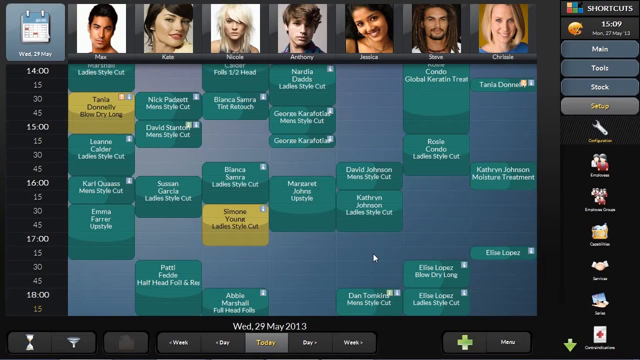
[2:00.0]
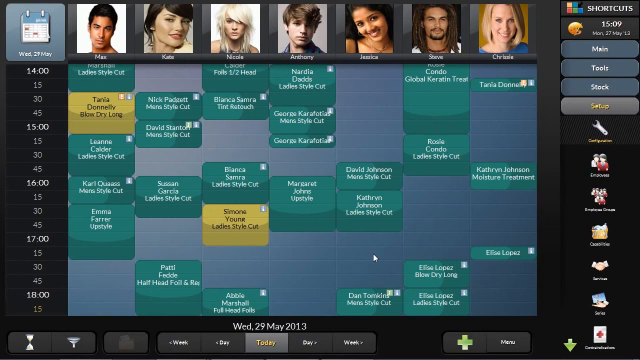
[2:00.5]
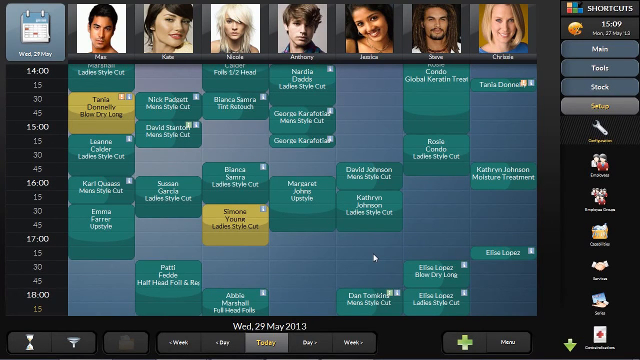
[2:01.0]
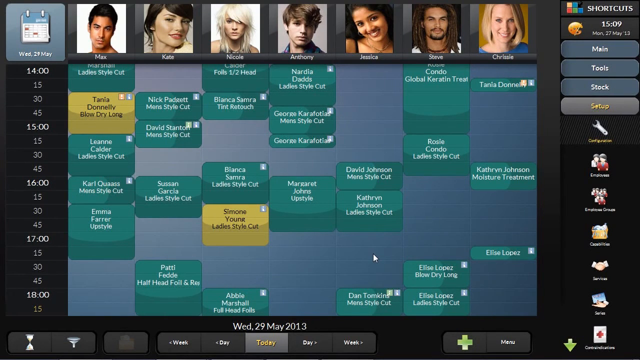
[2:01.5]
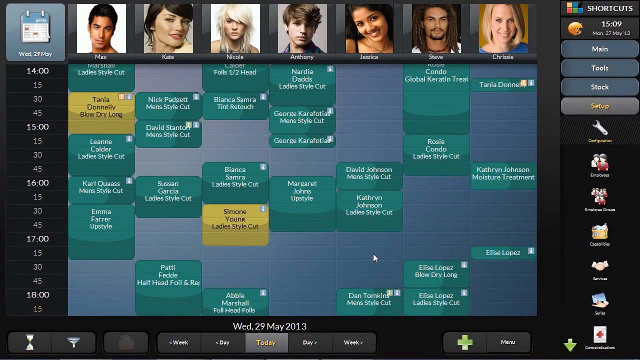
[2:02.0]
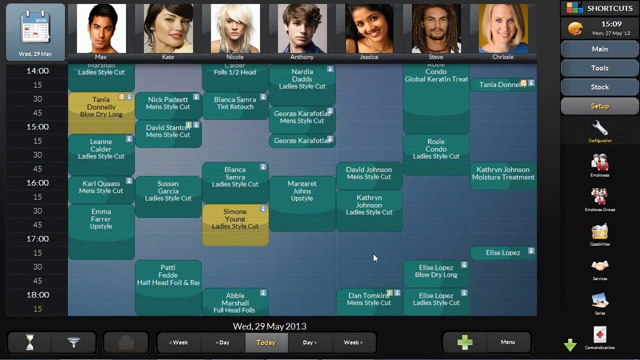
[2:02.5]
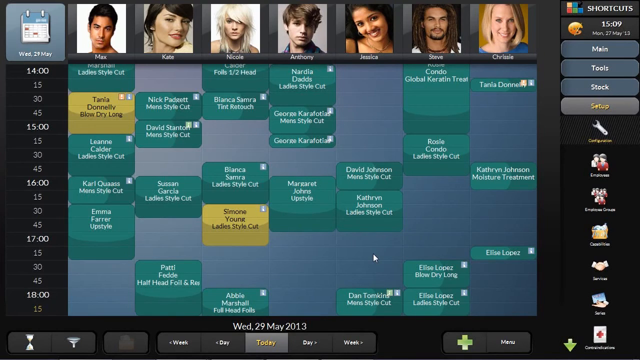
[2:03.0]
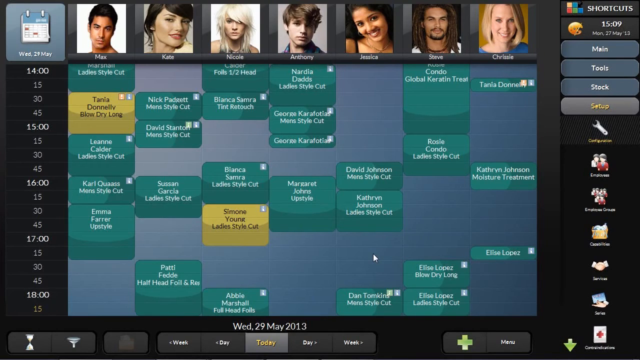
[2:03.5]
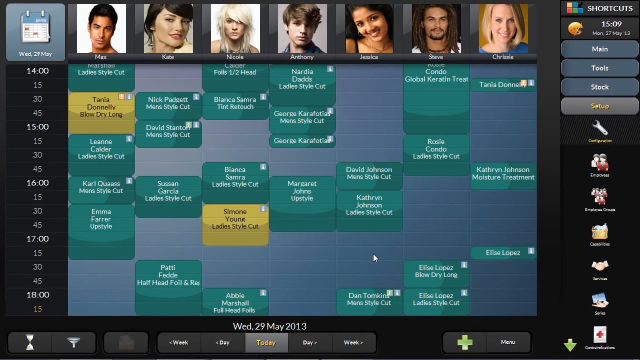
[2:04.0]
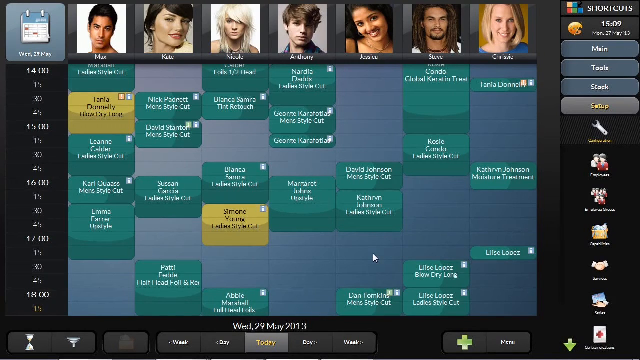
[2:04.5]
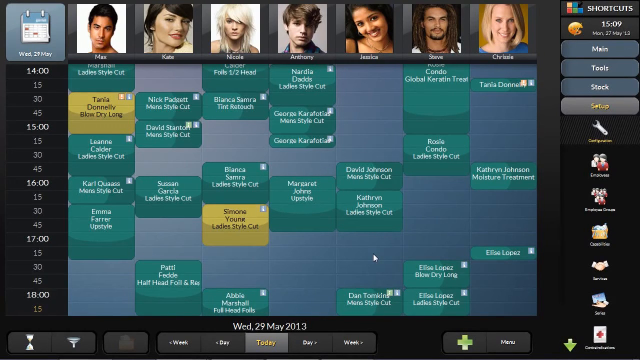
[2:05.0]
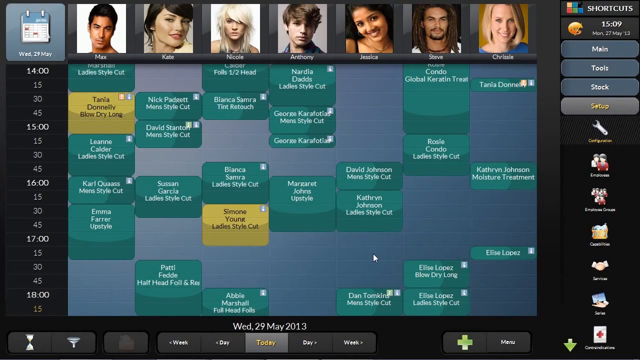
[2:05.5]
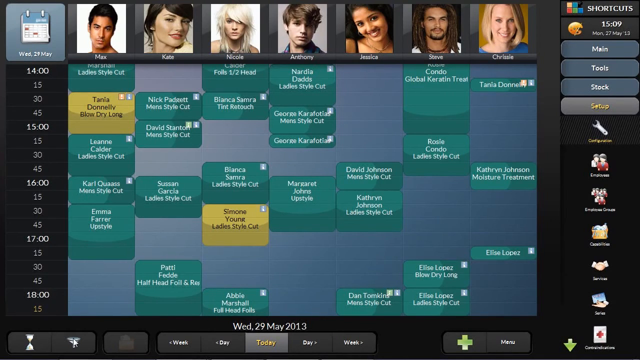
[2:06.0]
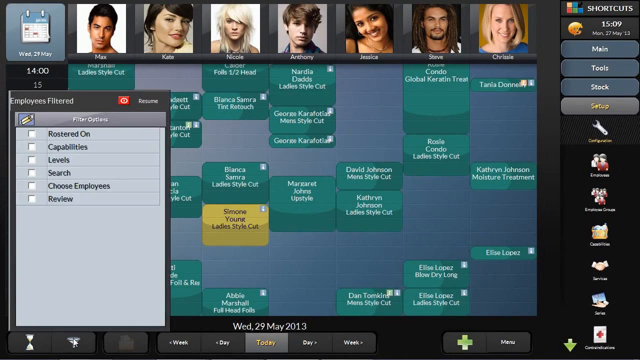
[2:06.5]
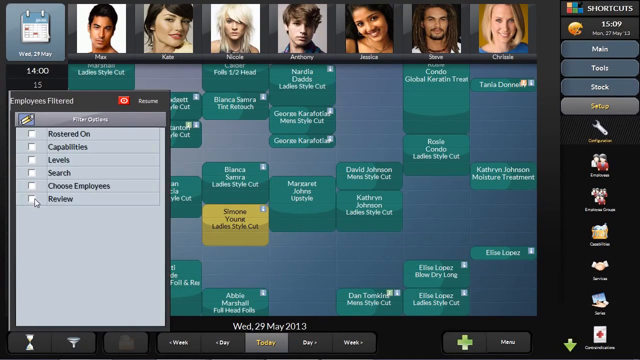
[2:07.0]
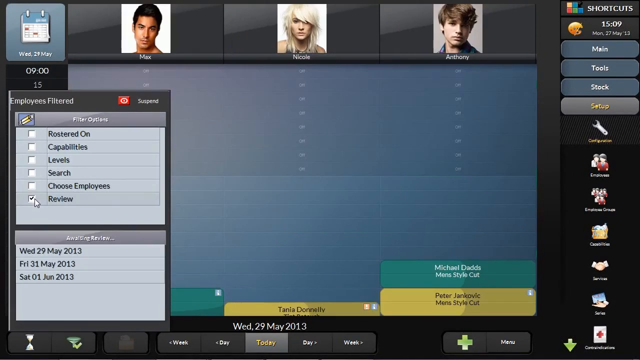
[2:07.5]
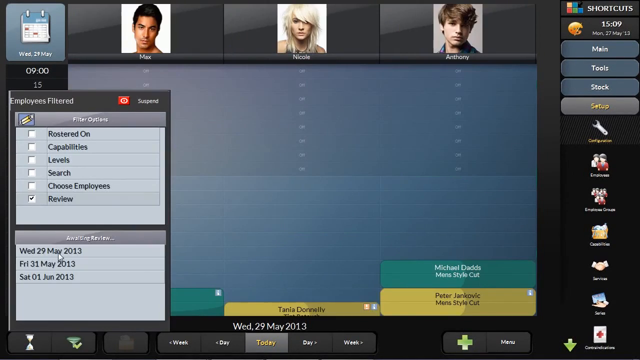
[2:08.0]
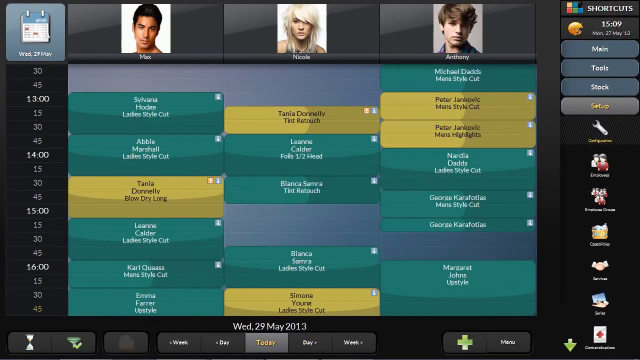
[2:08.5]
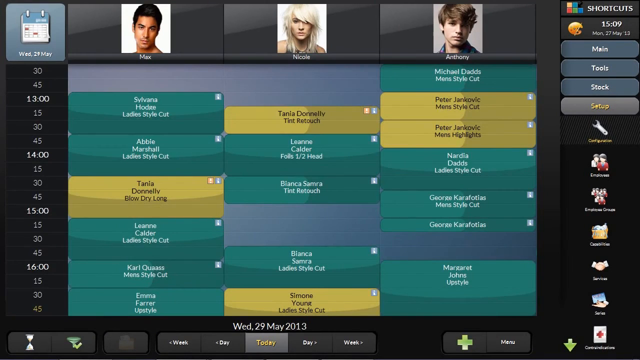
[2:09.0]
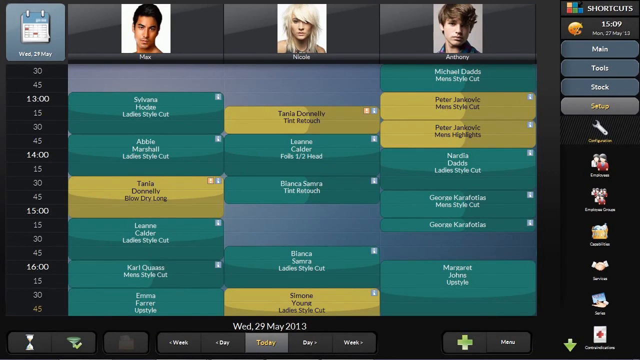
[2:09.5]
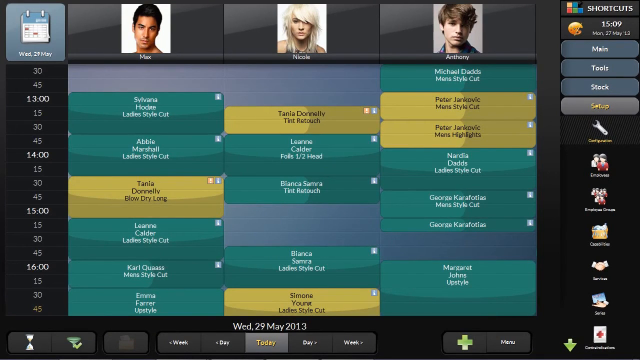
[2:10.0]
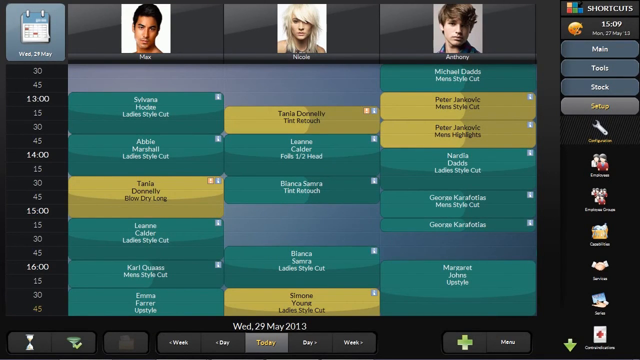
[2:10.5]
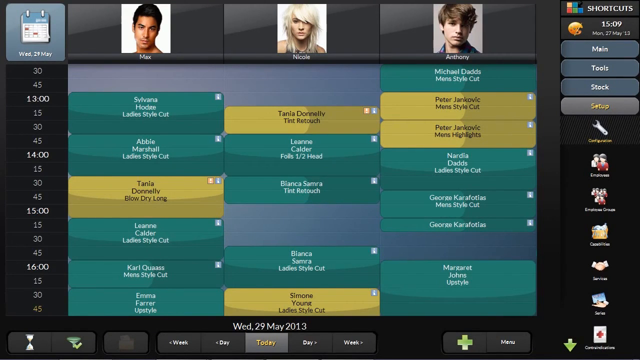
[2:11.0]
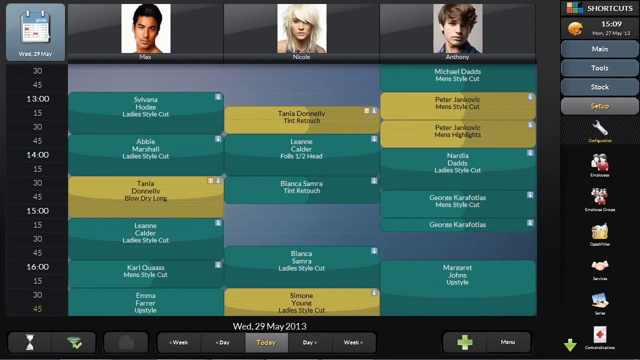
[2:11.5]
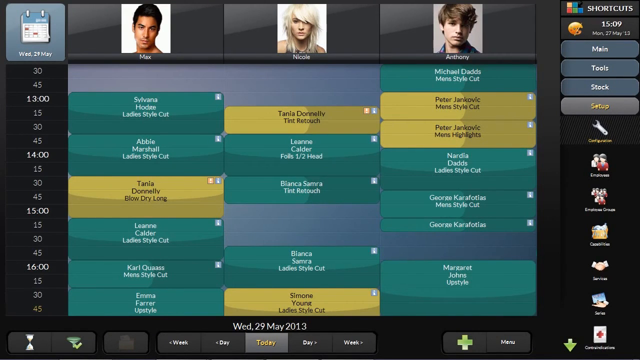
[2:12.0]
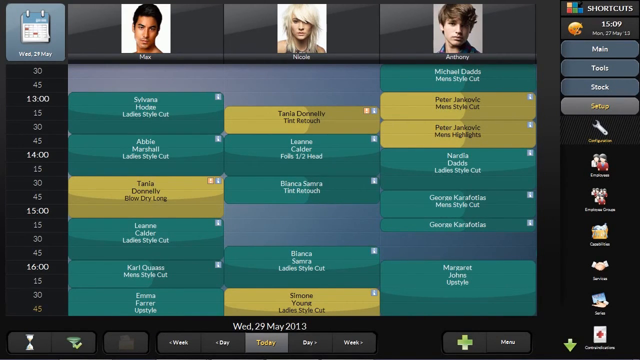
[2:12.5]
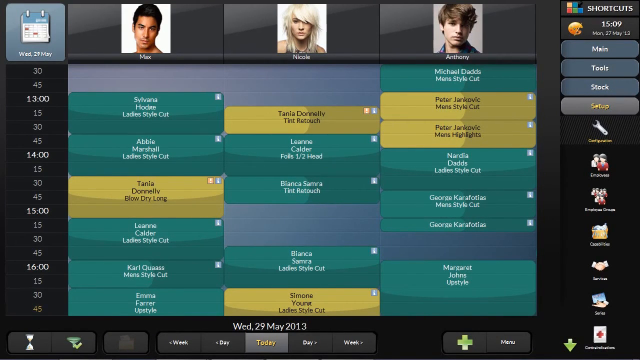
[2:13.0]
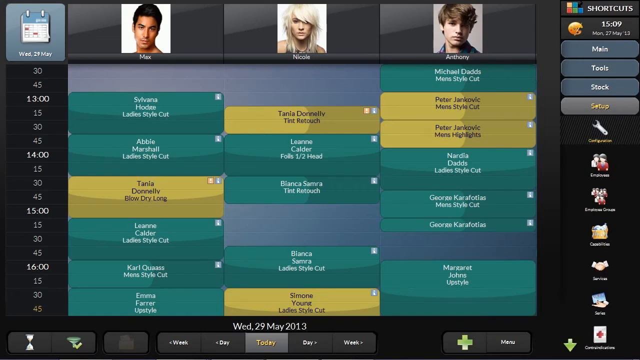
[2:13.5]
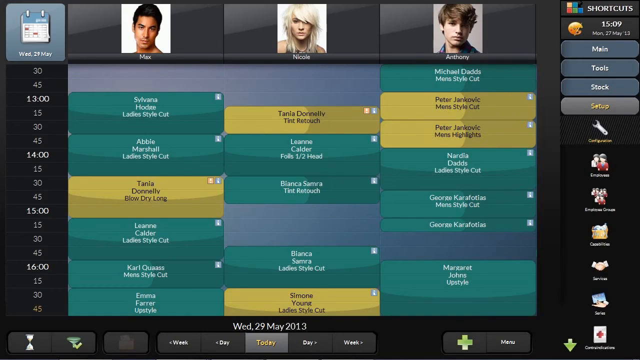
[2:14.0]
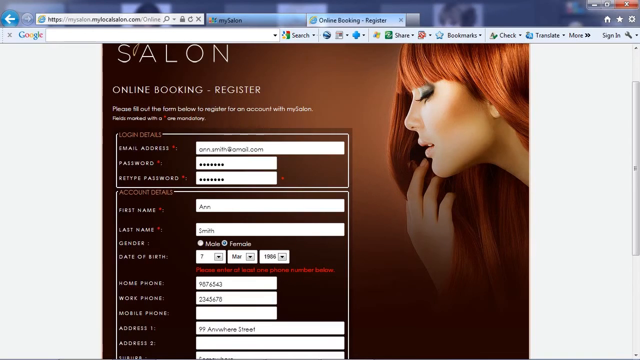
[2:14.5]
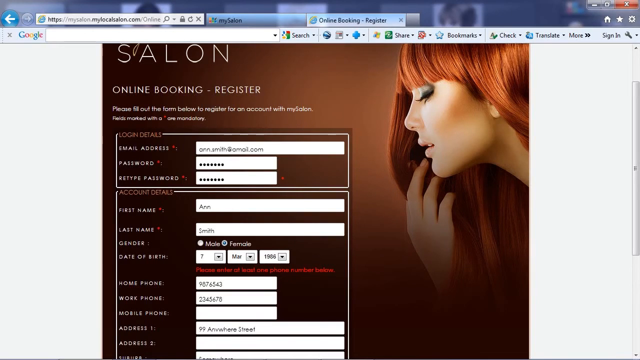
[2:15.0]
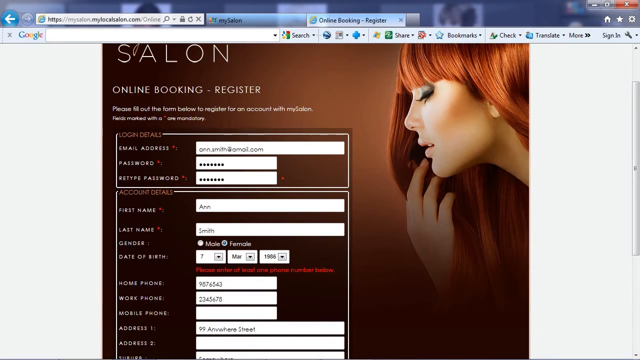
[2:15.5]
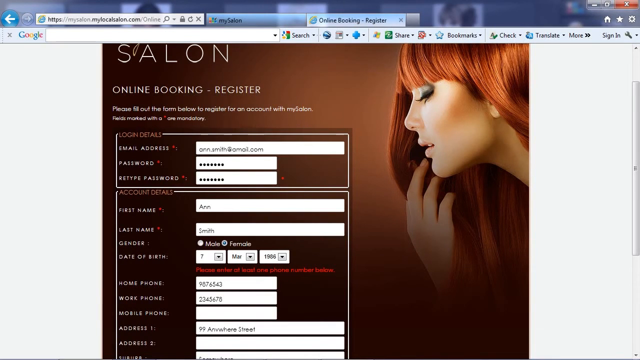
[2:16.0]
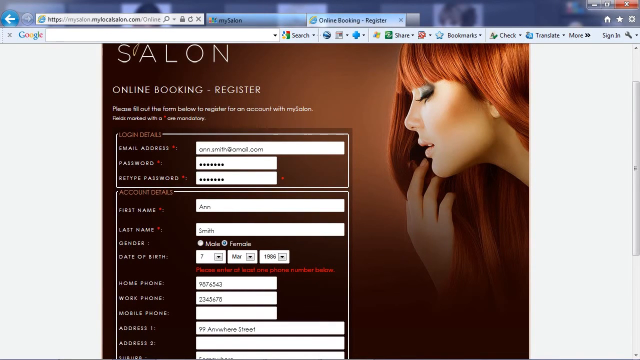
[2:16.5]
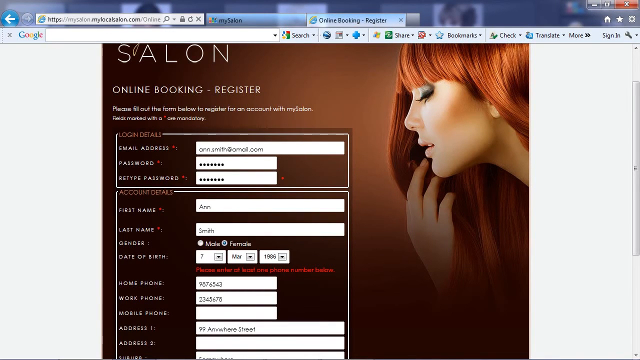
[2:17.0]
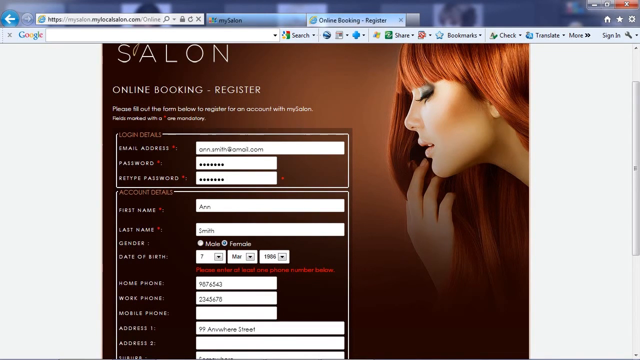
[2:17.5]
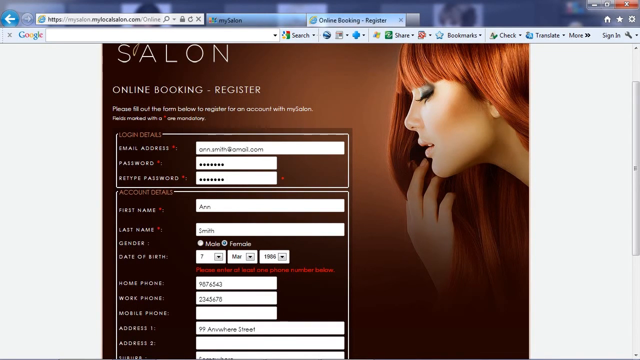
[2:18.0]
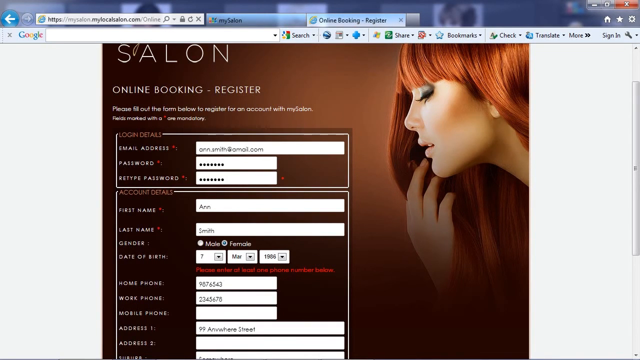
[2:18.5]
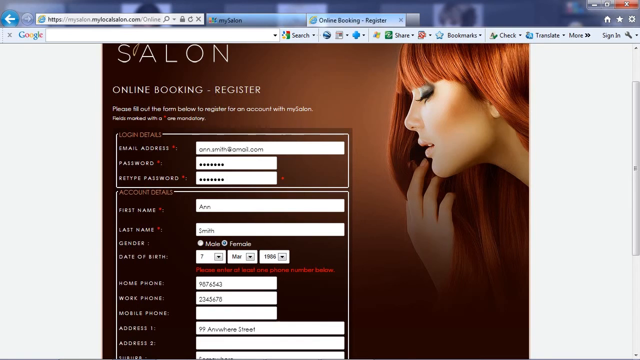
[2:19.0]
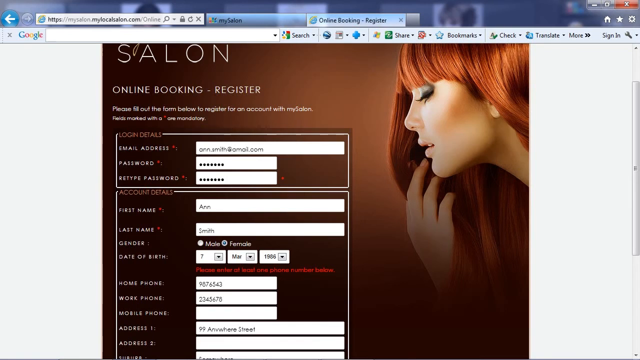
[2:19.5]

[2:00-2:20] The website shows which people are available at certain times and which are not. Each person's name is shown with their availability, along with where to enter the date and time and whether the person is available at that moment.